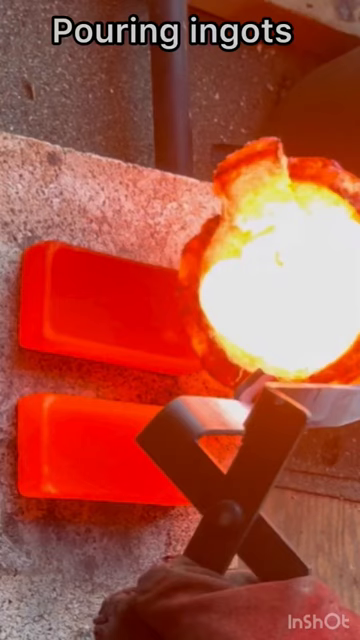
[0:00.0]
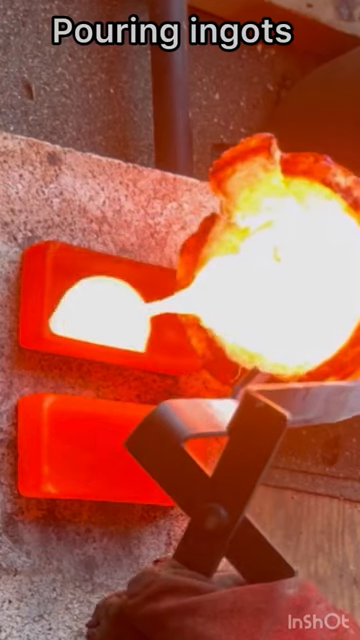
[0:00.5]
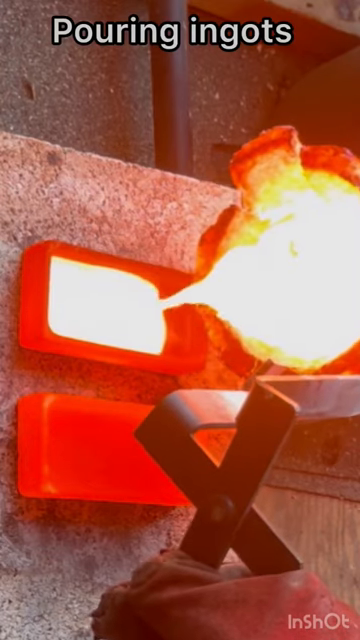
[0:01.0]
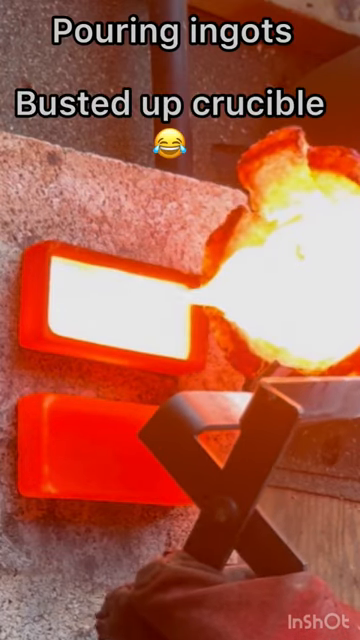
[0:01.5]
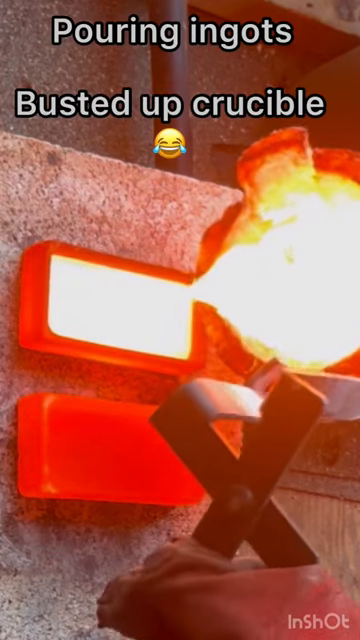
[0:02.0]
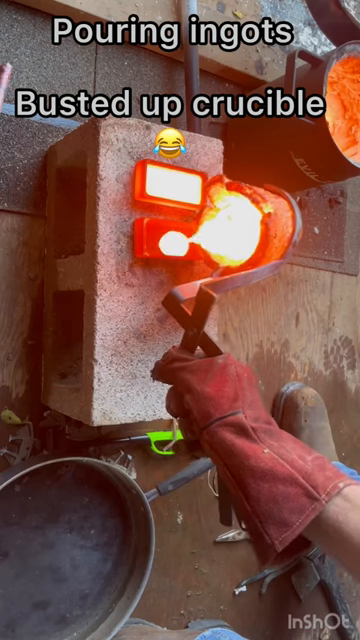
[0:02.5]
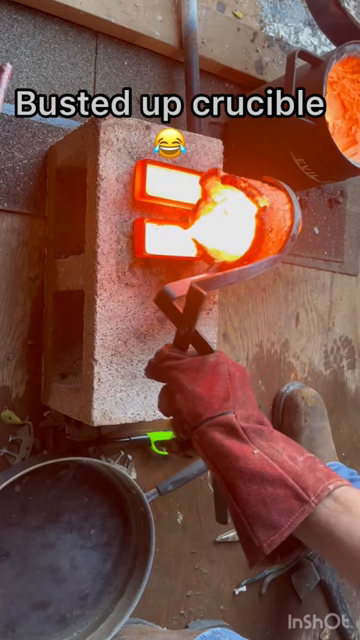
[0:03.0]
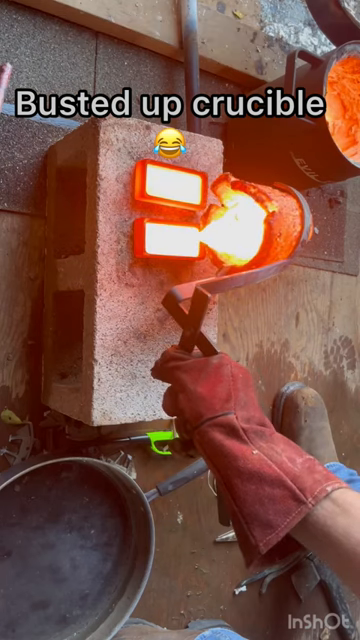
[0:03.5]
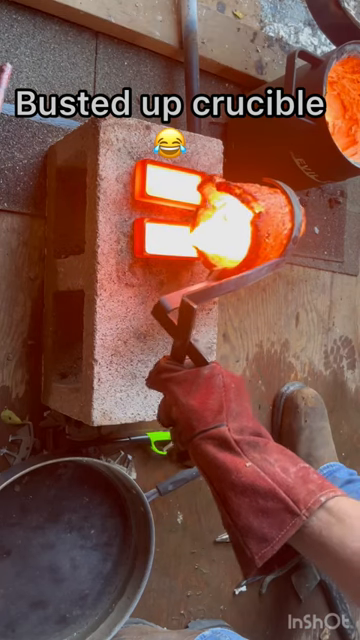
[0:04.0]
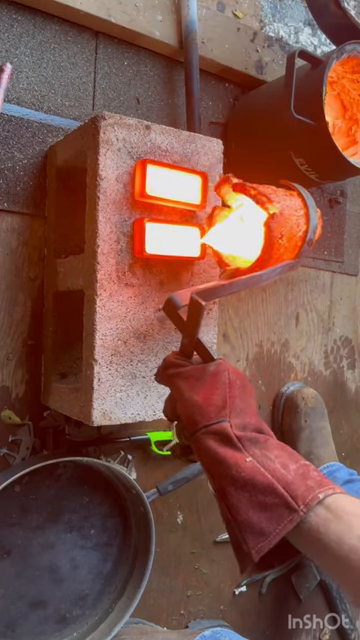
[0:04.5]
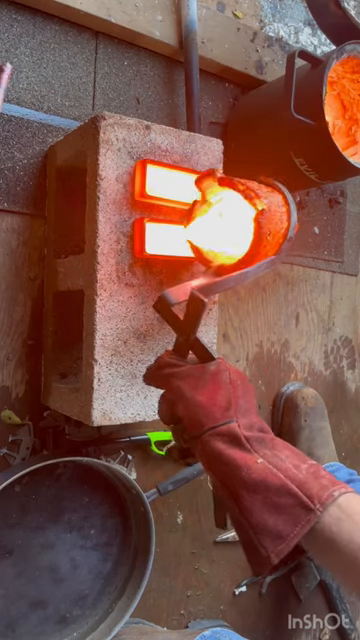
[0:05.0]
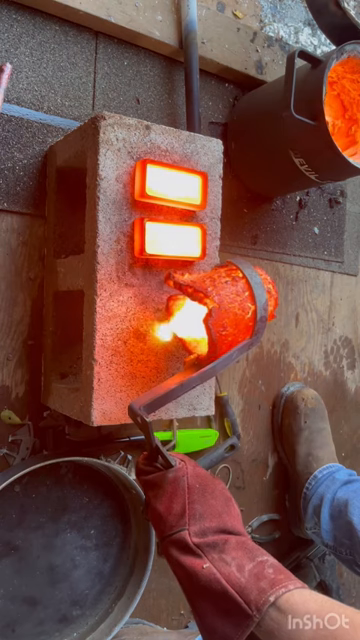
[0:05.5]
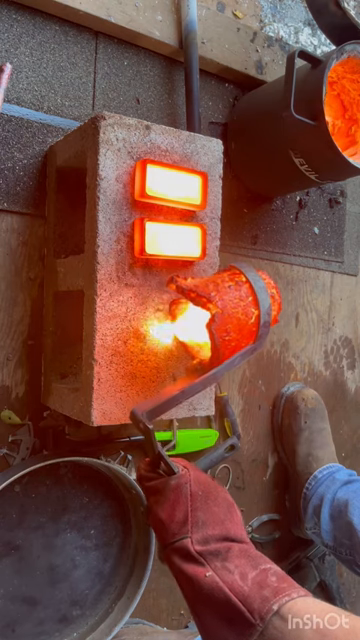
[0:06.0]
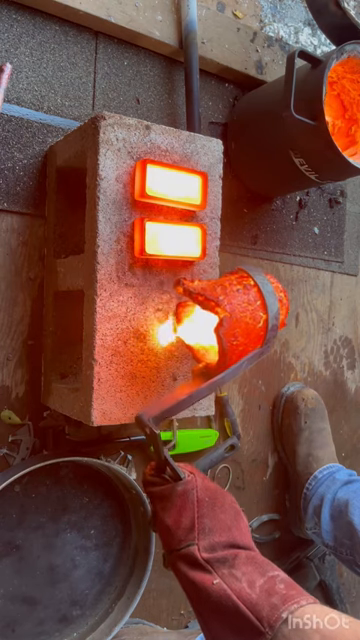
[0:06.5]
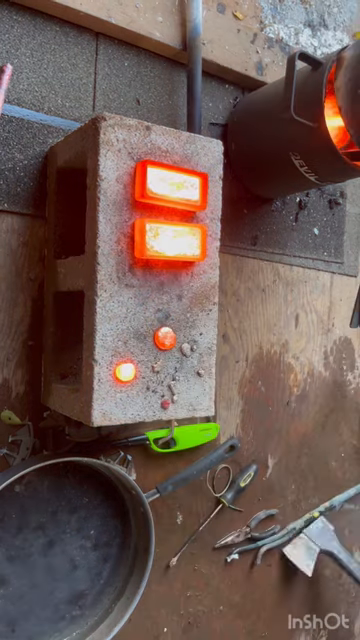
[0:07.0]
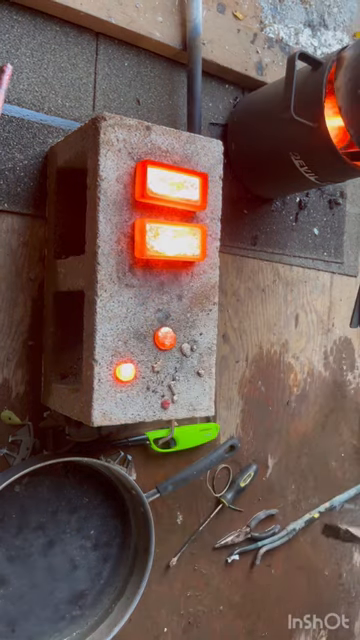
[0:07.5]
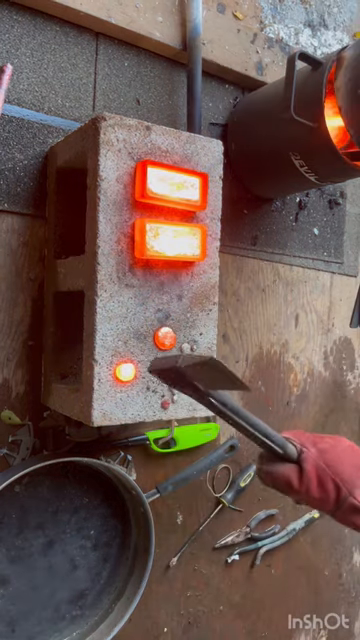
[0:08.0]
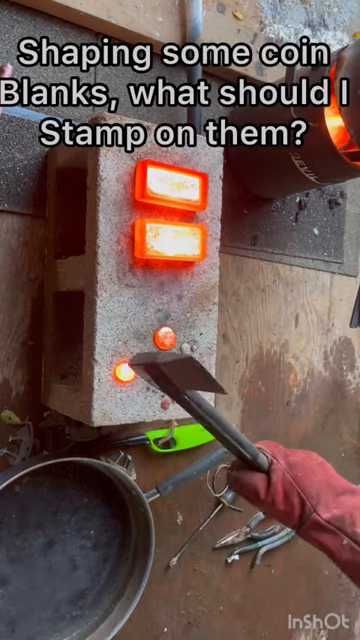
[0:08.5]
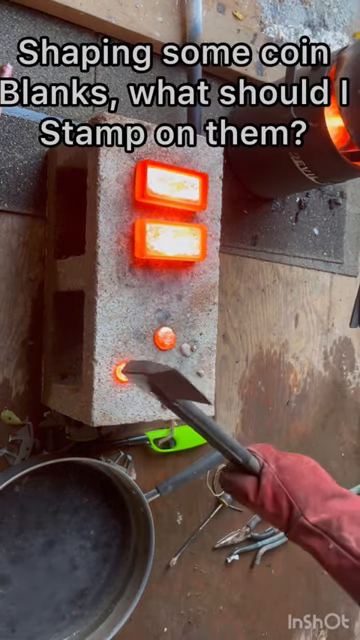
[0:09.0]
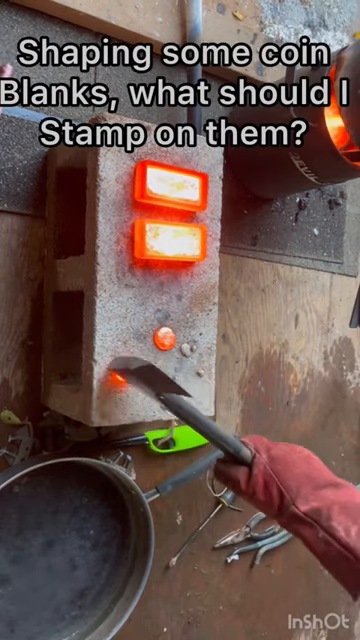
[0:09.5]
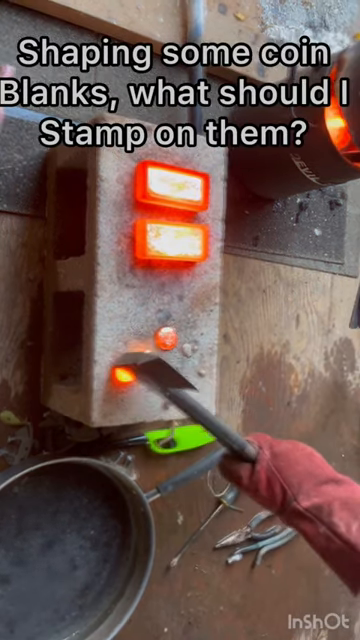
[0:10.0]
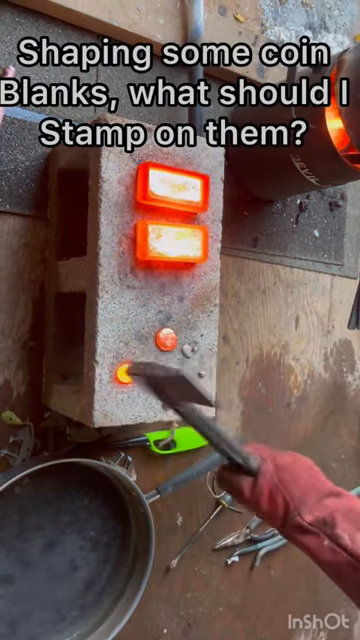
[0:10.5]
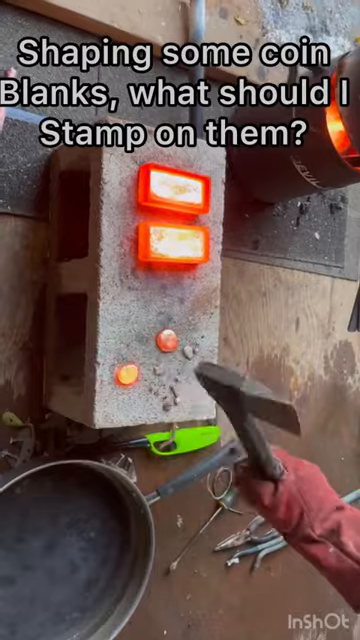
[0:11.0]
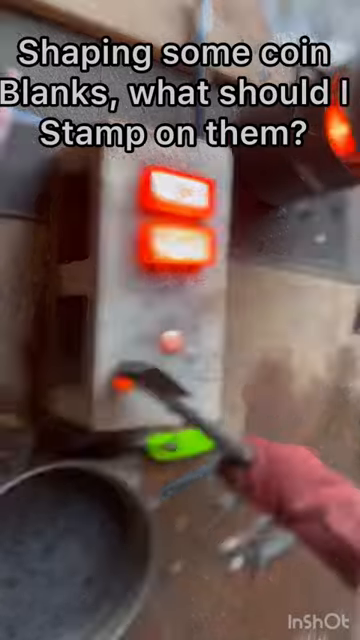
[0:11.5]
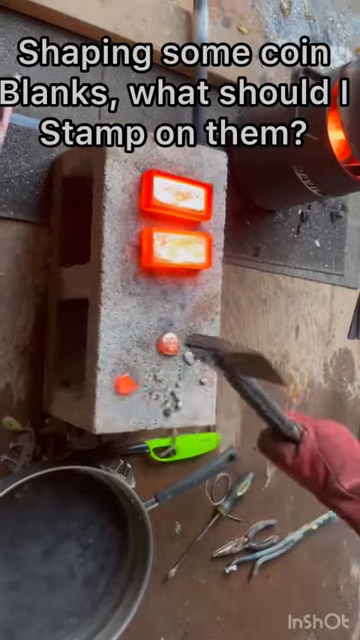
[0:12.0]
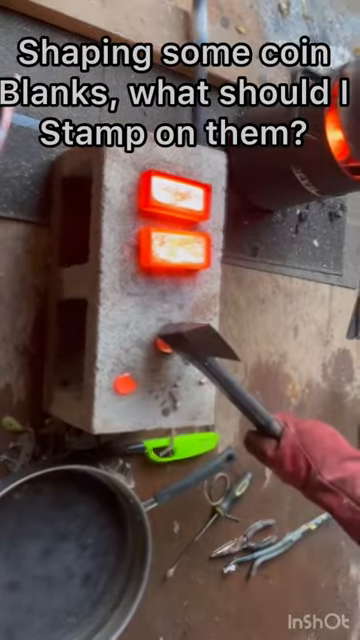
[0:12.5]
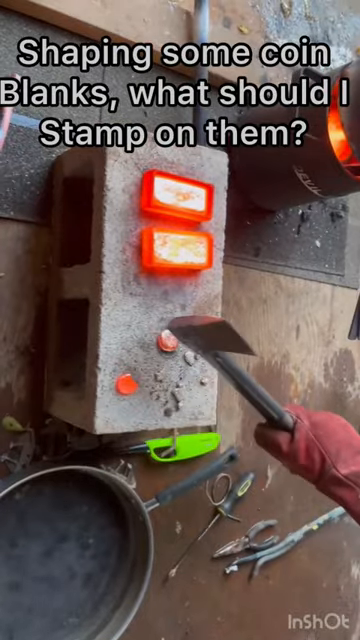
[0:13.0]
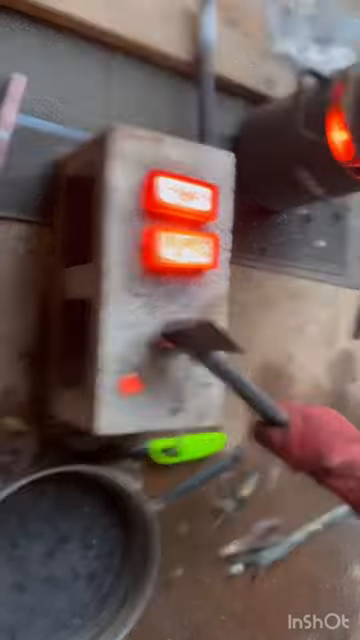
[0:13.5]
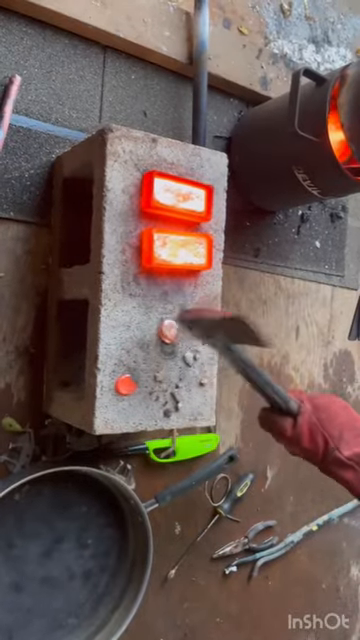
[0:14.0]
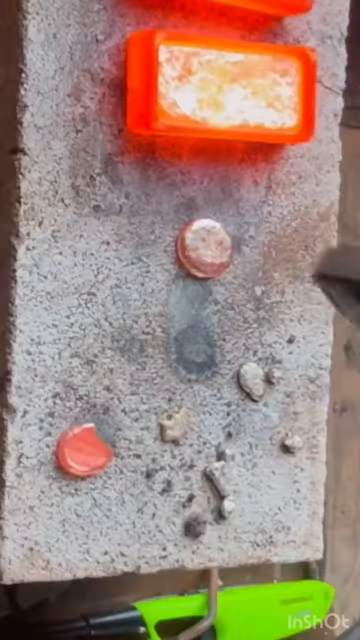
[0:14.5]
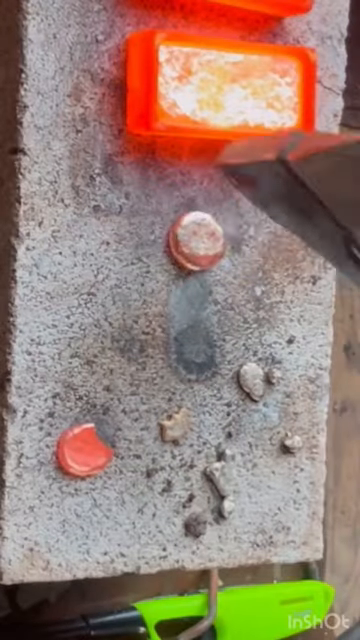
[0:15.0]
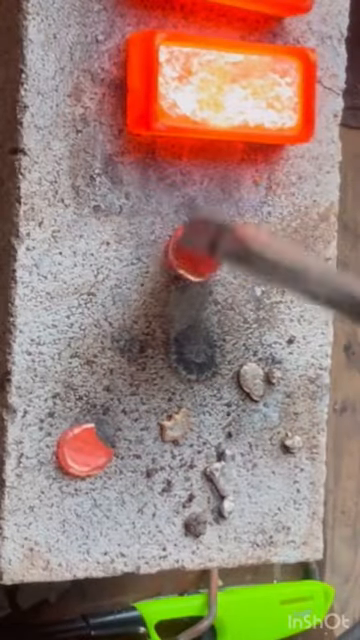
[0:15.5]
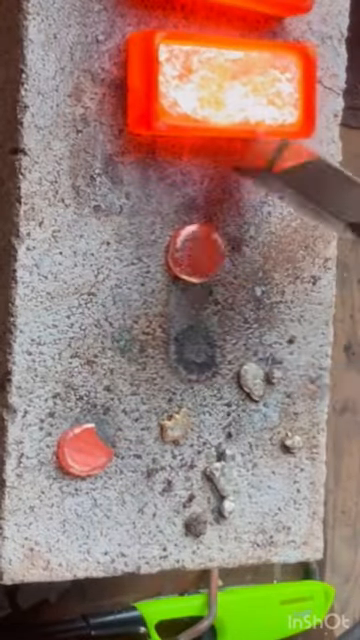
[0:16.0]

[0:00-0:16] The video, from B&E Metal Melting (4.49k subscribers), is about pouring bronze ingots and coin blanks. It opens with molten metal being poured into molds by a person wearing a fireproof glove; only the one hand doing the pouring is visible, and the person also wears jeans and what look like work boots. The setting is industrial, and the molds are sitting on a concrete block, a cinder block. The metal is poured from a cup held in a hand clamp, and it is clearly molten during the initial pouring. Beside this are some buckets, one apparently containing hot metal and another that looks like it might have water in it. While bits of metal are being poured, text comes in reading "Pouring ingots, busted up crucible." Then the text "Shaping some coin blanks. What should I stamp on them?" is overlaid while a hammer hammers small round pieces of metal; he is using the back of an axe head to hammer out the coin blanks. Closer to the end, there is a closer image of the metal coin blanks. The camera is positioned above and at an angle, the video resolution is not high, and the video is letterboxed with black rectangles on either side.